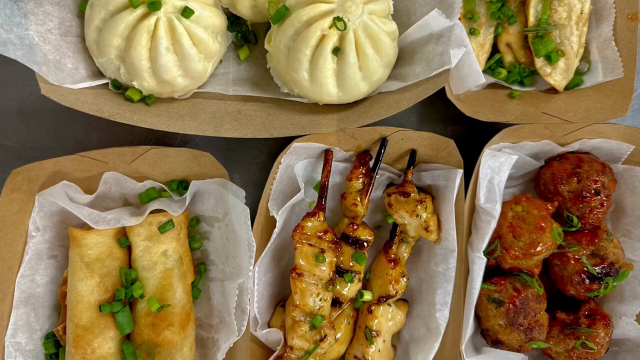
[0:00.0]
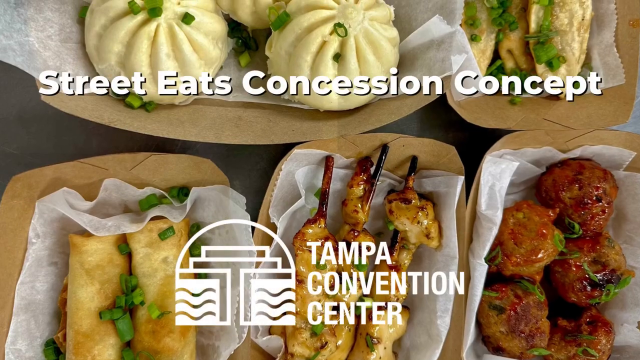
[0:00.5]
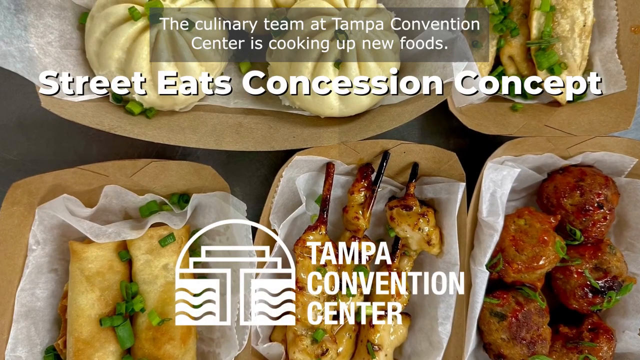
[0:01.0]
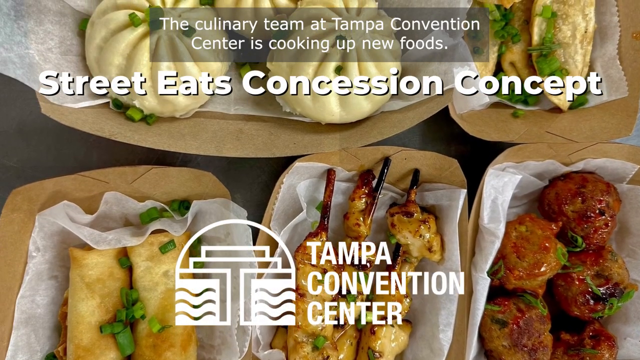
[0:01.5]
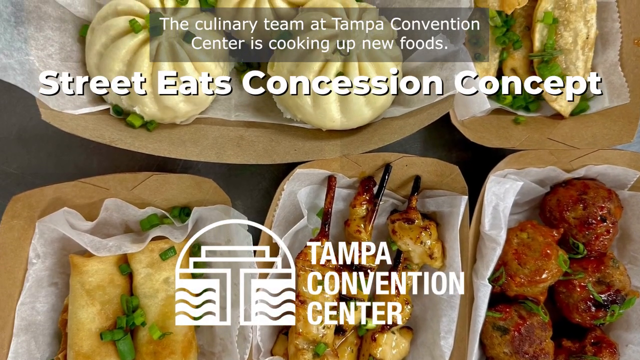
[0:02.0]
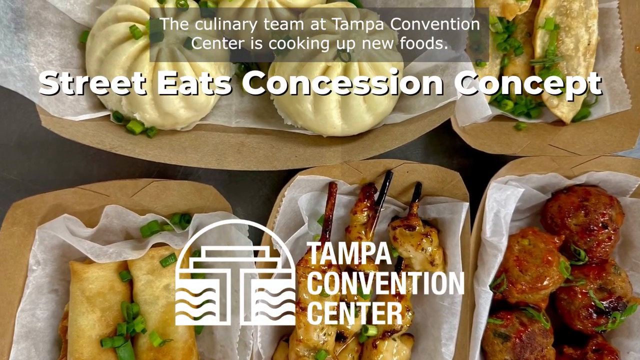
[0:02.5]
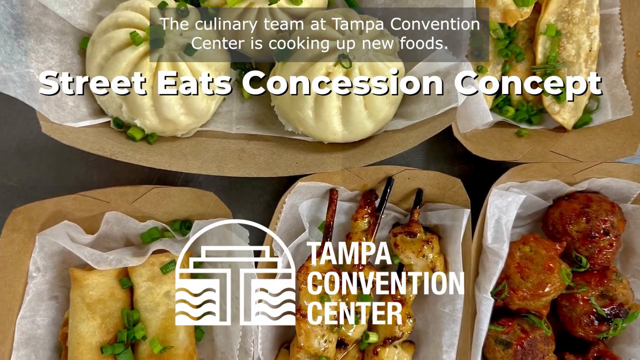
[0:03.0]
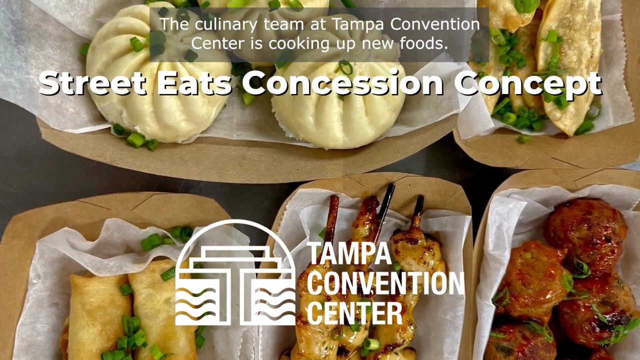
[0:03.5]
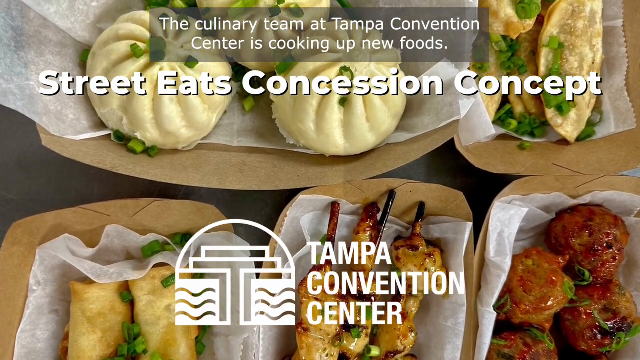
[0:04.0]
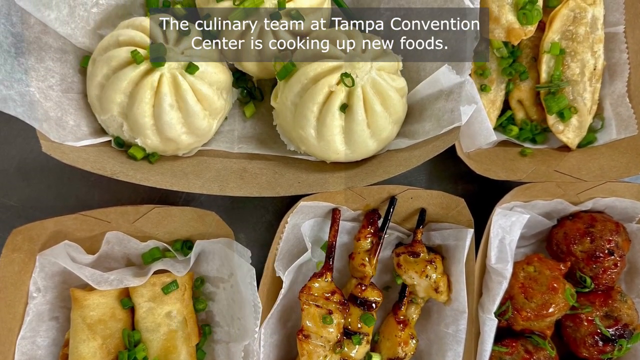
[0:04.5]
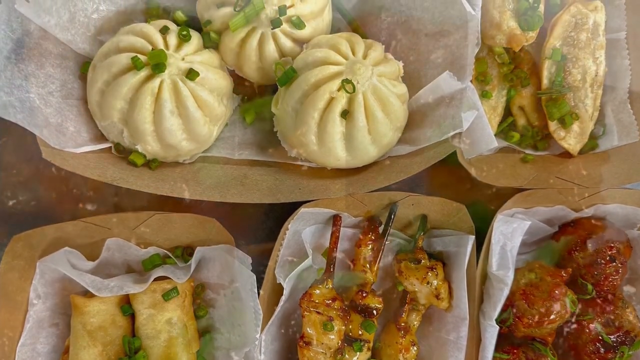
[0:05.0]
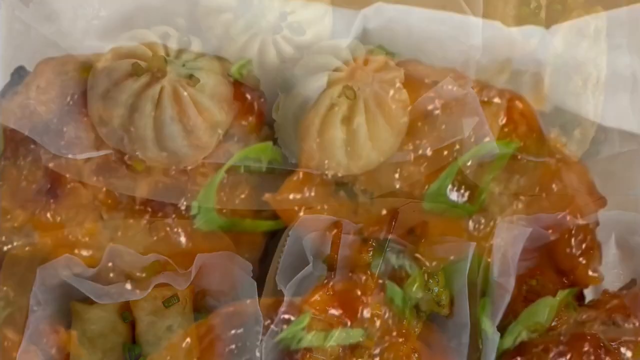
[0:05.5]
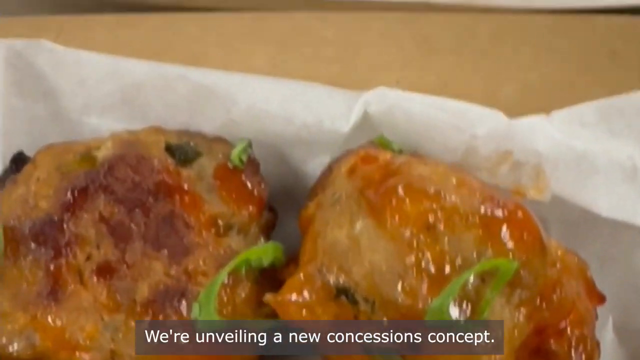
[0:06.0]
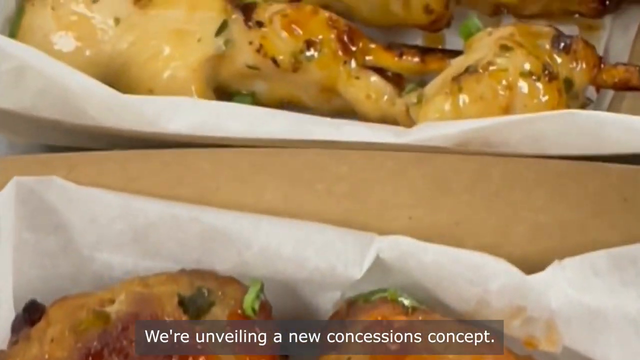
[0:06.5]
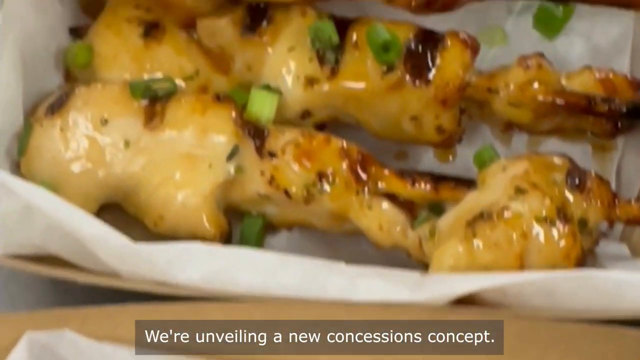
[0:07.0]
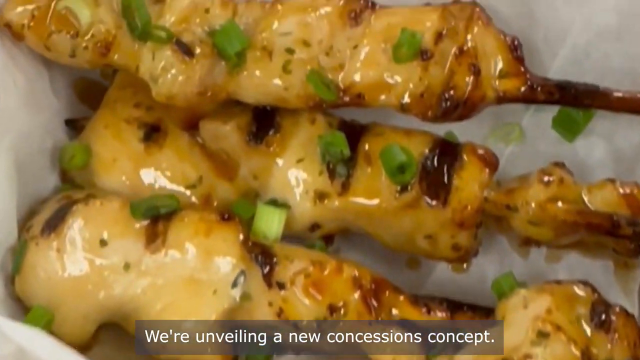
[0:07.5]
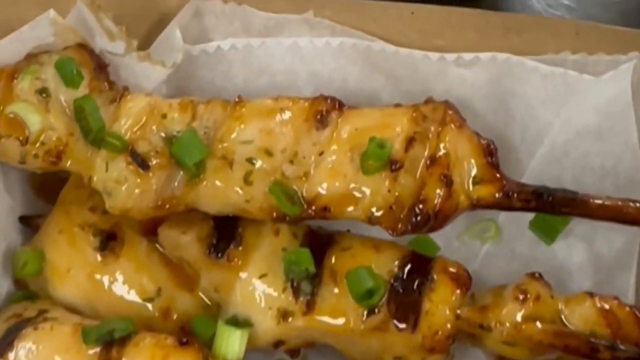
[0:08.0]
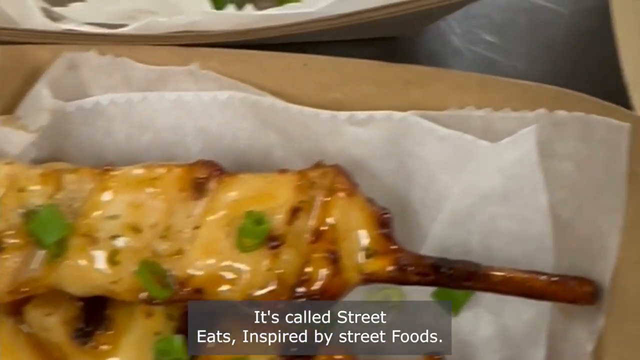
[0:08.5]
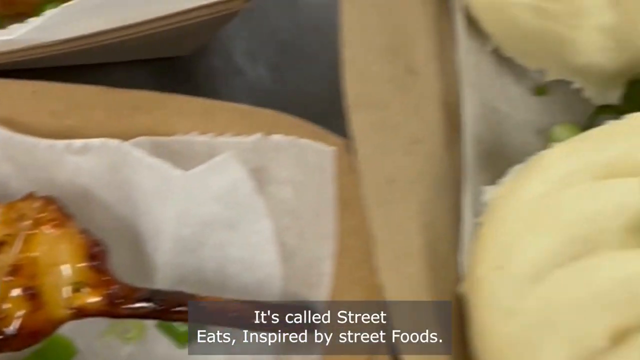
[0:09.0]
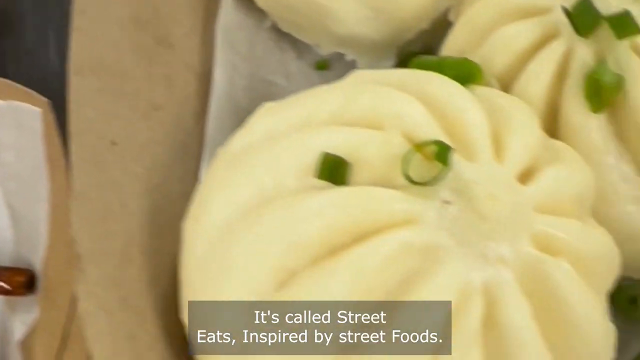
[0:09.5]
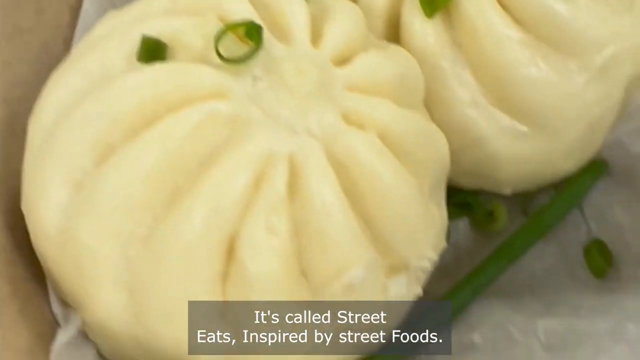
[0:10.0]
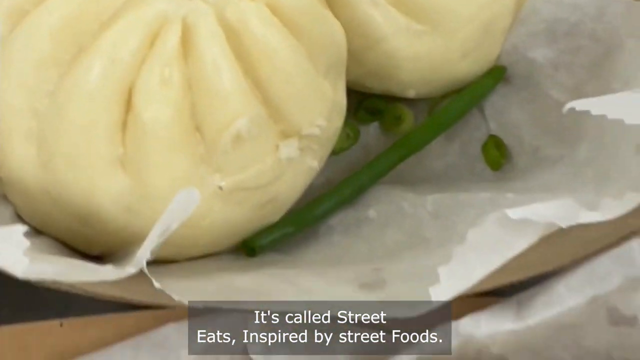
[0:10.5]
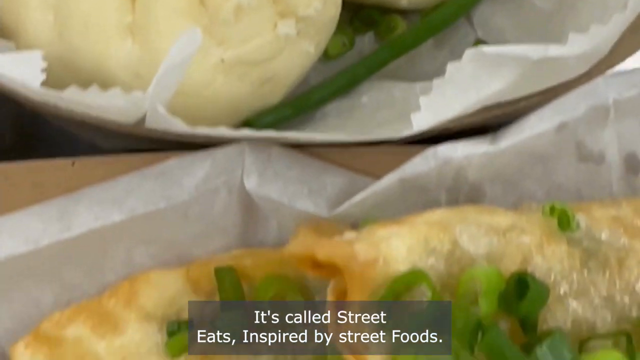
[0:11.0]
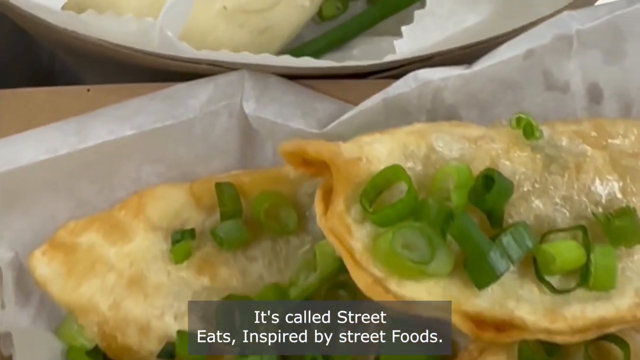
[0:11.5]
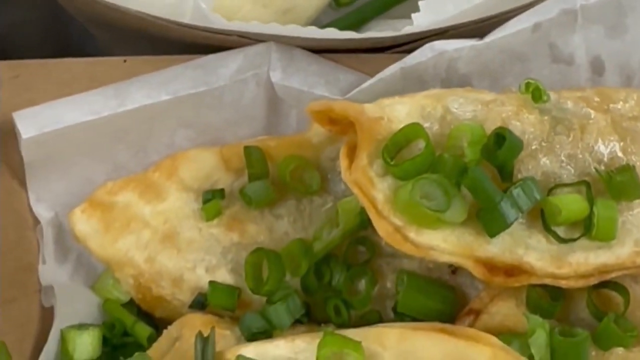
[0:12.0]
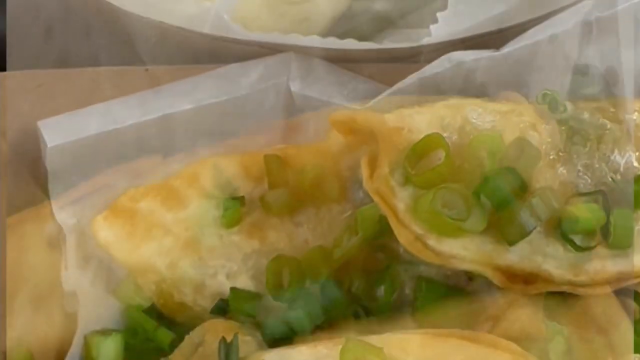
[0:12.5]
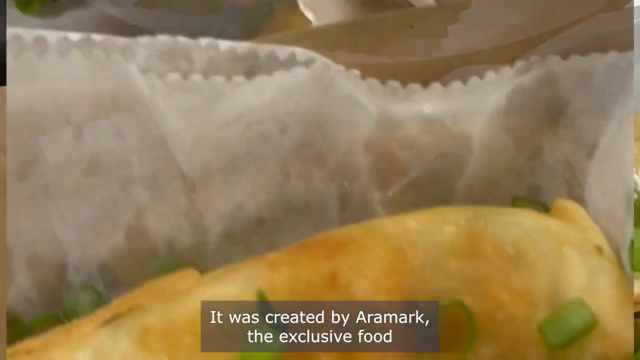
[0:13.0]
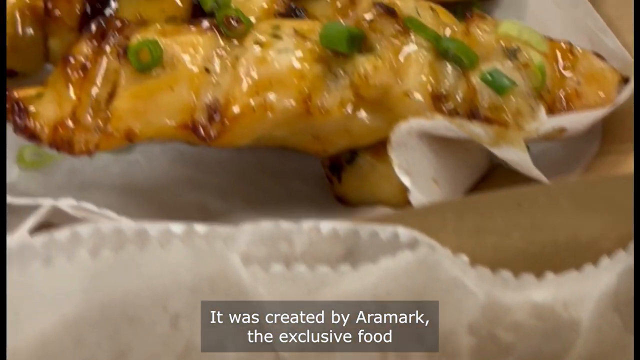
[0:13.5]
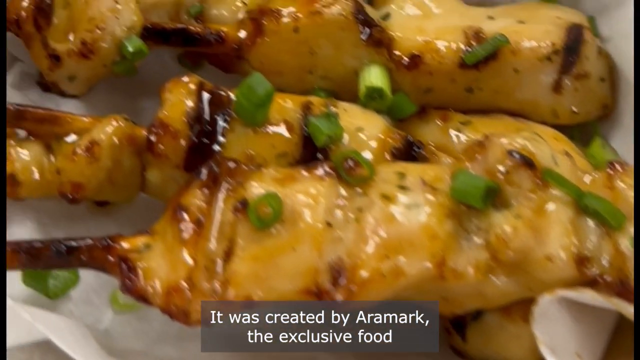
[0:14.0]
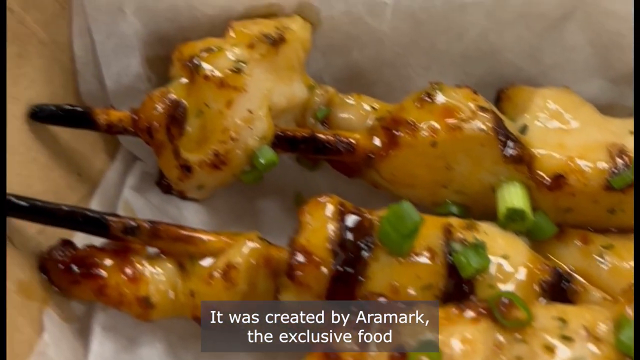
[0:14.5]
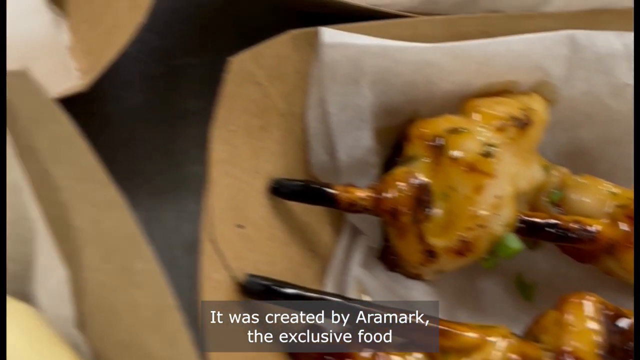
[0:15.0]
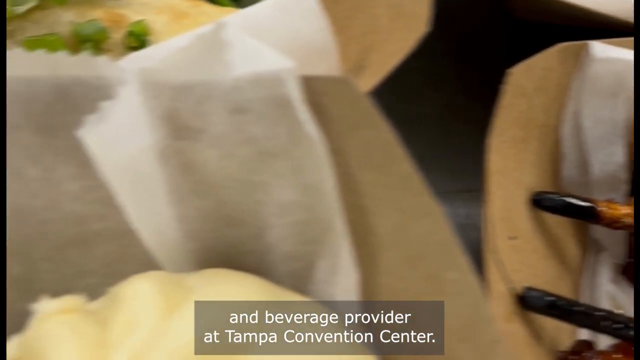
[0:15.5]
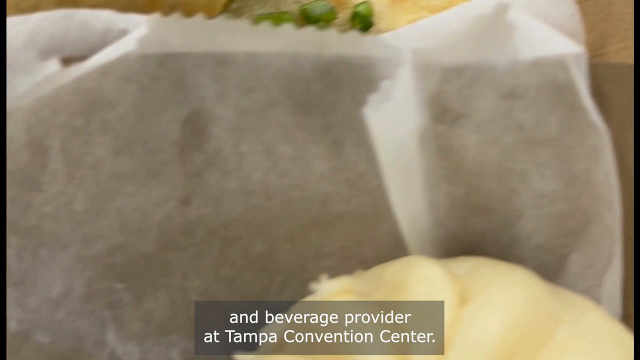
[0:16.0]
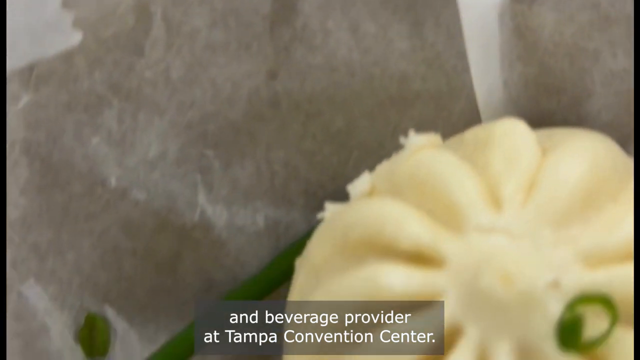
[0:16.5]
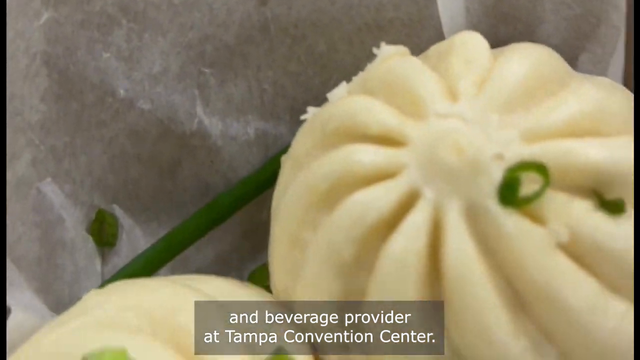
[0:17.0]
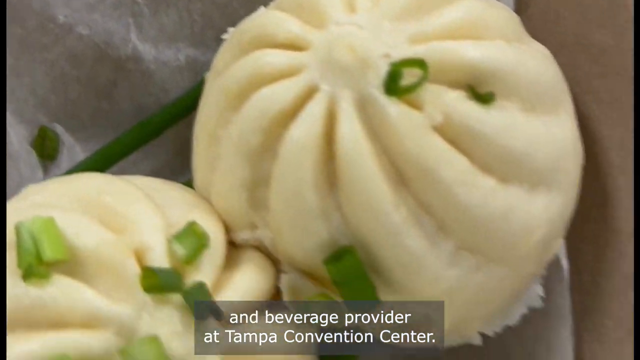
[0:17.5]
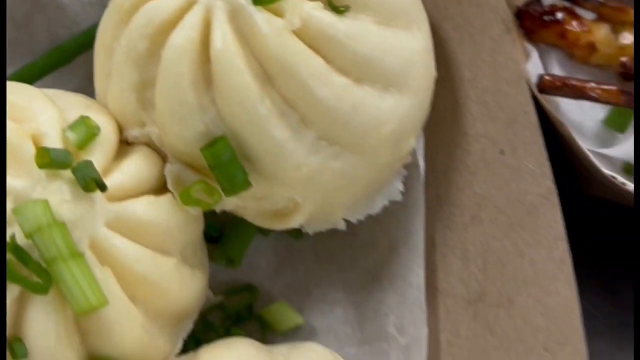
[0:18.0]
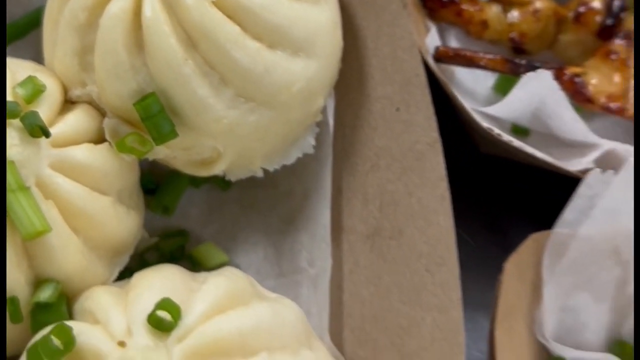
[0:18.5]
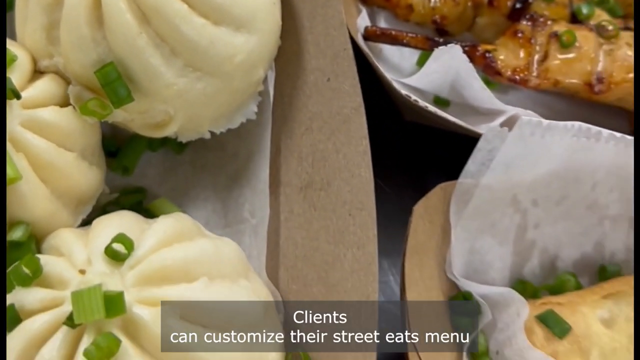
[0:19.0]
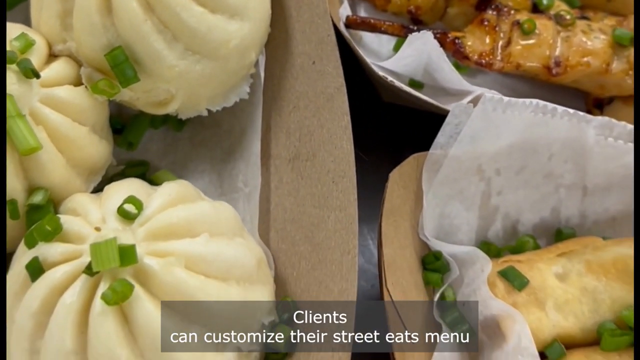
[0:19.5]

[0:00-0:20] A counter with many different foods on it opens the video. There are at least five brown paper basket-like containers lined with thin white paper, most of them holding something that looks fried. At the bottom left are a couple of burrito-like items, followed by three skewers of what is perhaps chicken breast, and then five meatballs with a red, tomato-like sauce. At the top left are at least three items that look like steamed buns, and above them to the right is some fried wonton topped with green onion. Text appears over everything reading "street eats concession concept", and below it, toward the center, "Tampa Convention Center". The foods keep moving behind the text, and the next few shots are close-ups of the various foods, including the buns, the satay-like skewers and other fried foods.